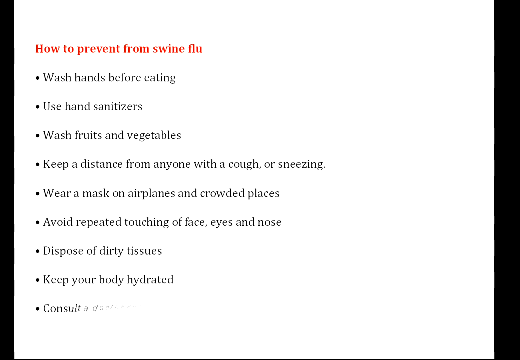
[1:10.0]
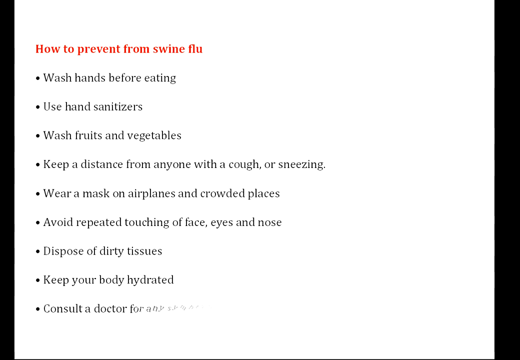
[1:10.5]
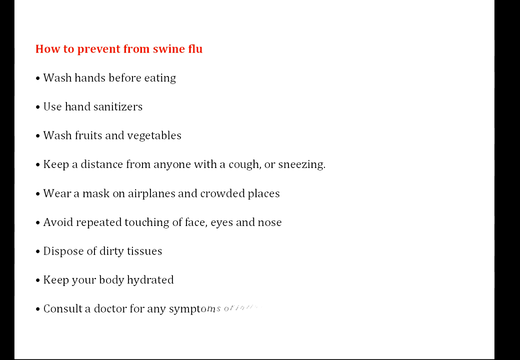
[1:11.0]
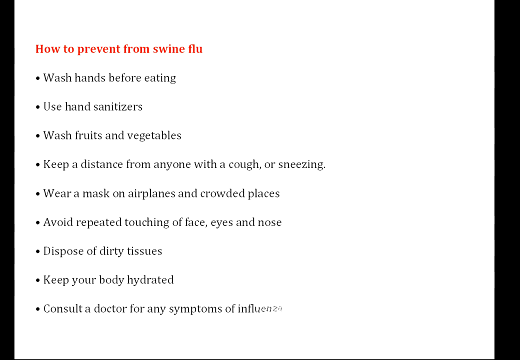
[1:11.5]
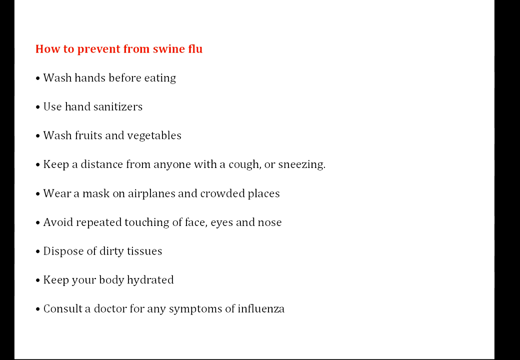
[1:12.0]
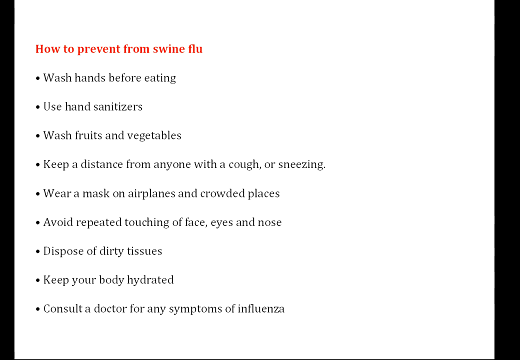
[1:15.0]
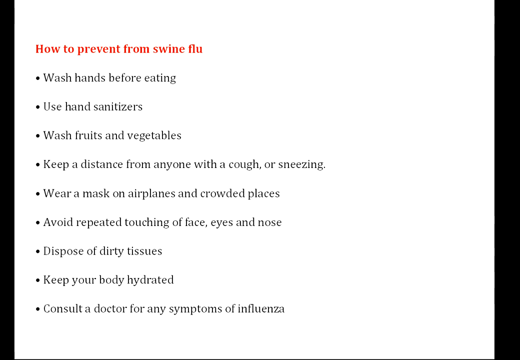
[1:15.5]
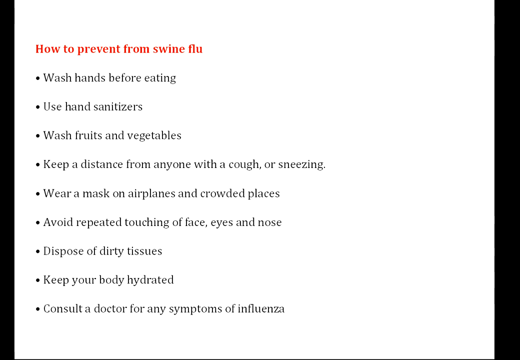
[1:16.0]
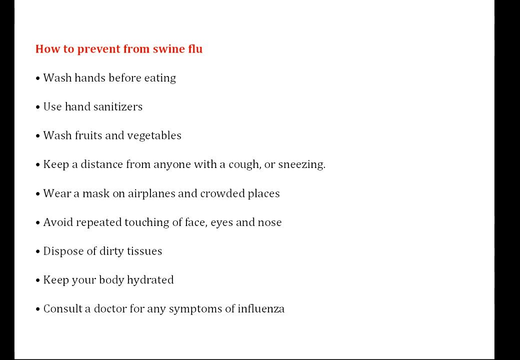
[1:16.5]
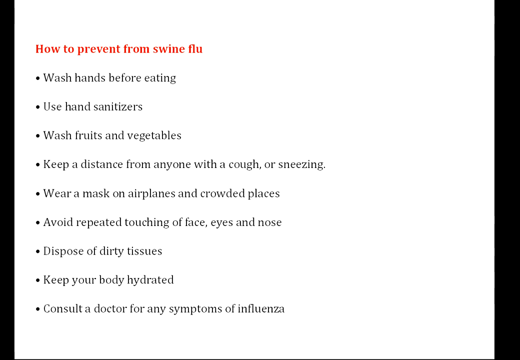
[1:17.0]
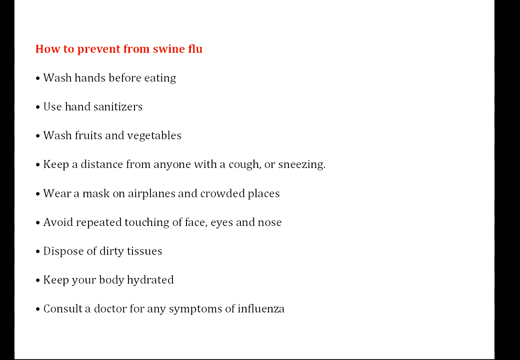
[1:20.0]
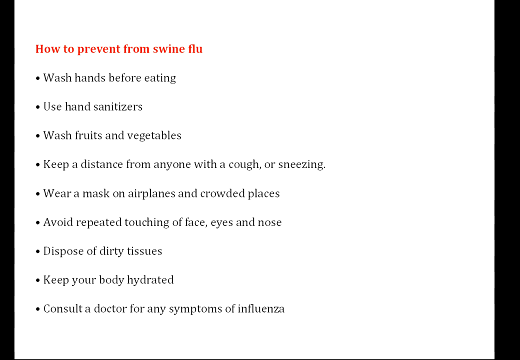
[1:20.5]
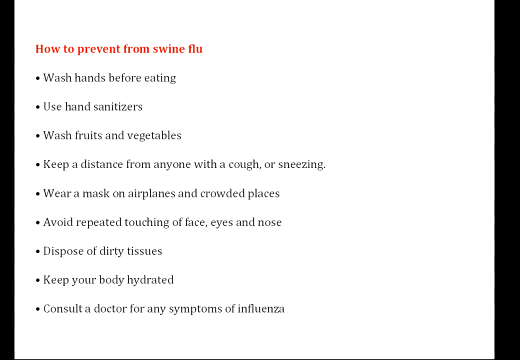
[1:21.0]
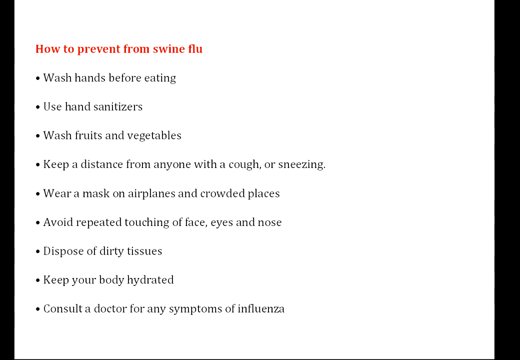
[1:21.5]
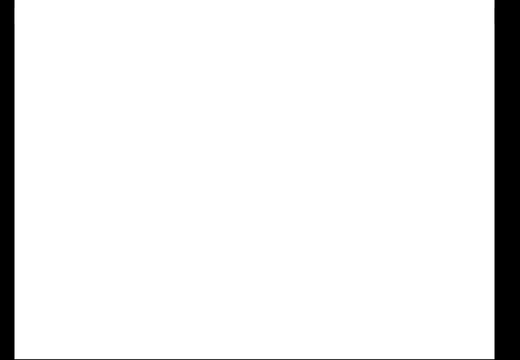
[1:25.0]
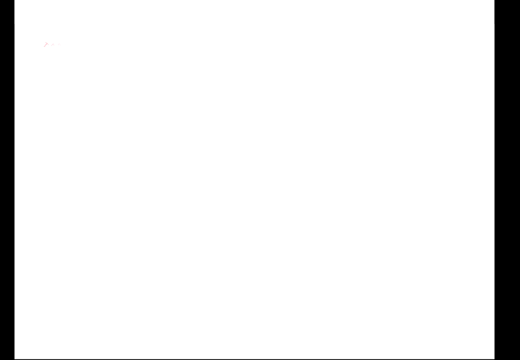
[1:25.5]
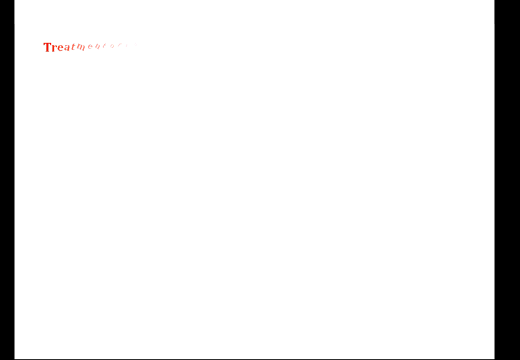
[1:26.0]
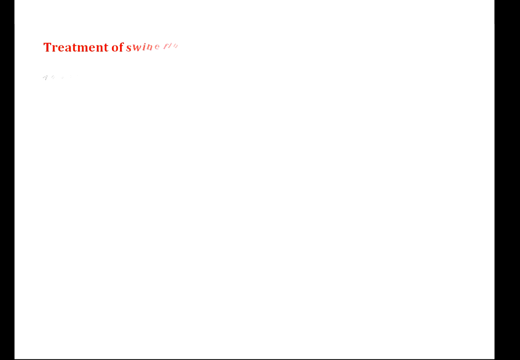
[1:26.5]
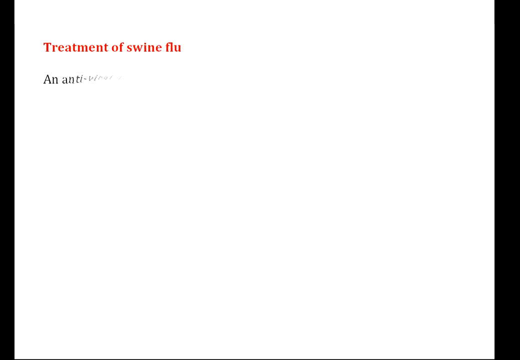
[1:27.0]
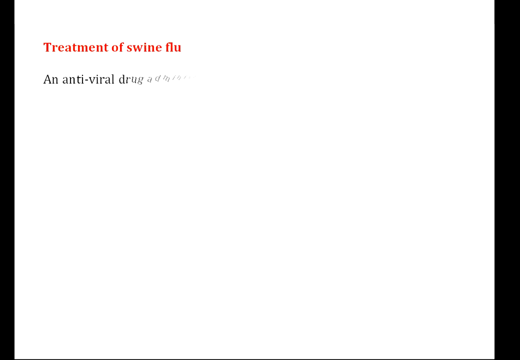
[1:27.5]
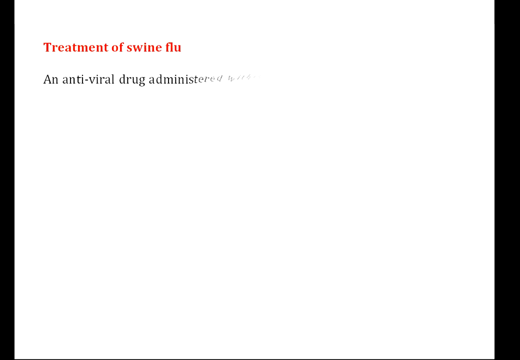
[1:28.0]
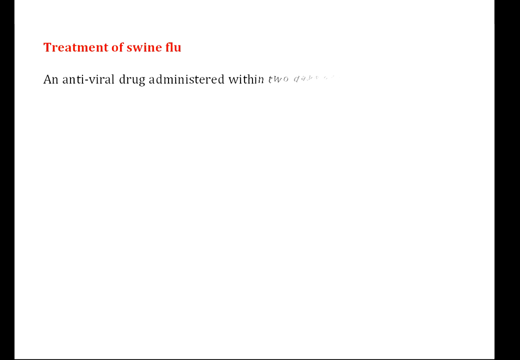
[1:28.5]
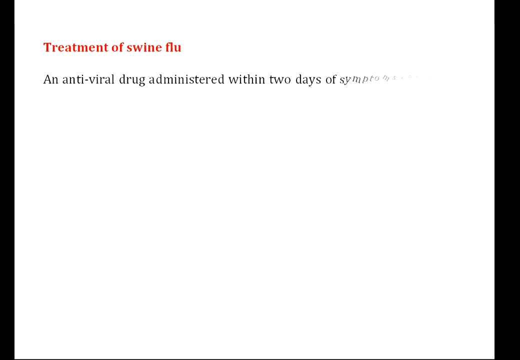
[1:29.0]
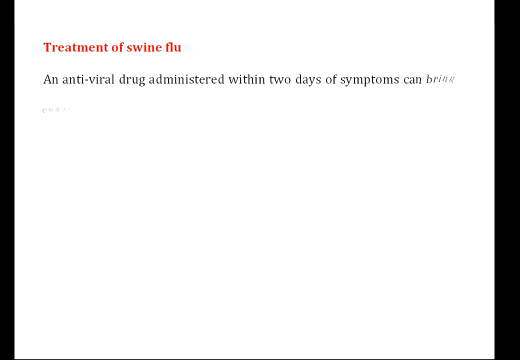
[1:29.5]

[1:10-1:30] On a white screen, red text reads "How to prevent from swine flu". Below this header, bulleted points in black text include: wash hands before eating, use hand sanitizers, wash fruits and vegetables, keep a distance from anyone with a cough or sneezing, wear a mask on airplanes and crowded places, avoid repeated touching of face, eyes, and nose, dispose of dirty tissues, keep your body hydrated, and consult a doctor for any symptoms of influenza. The screen fades, and text appears on another screen. At the top, a red header reads "Treatment of Swine Flu". Below it, a definition is added slowly, one letter at a time, in black text. By the end of the shot, the words "An anti-viral drug administered within two days of symptoms can bring considerable" have been added to the screen.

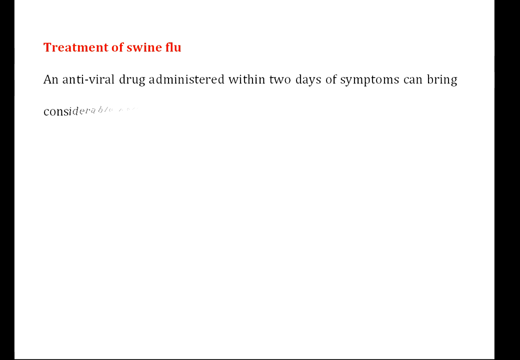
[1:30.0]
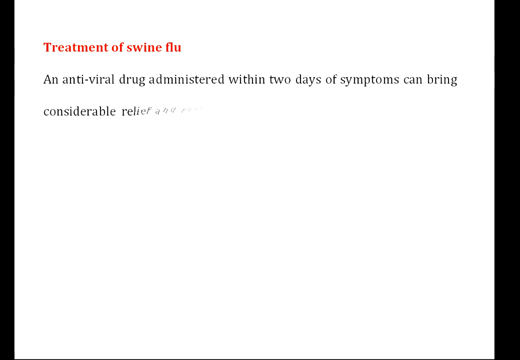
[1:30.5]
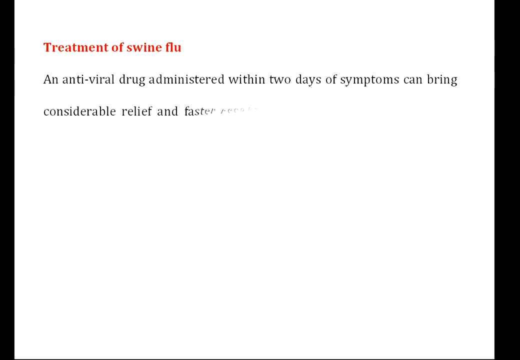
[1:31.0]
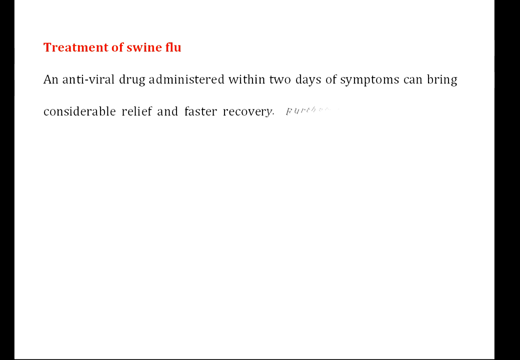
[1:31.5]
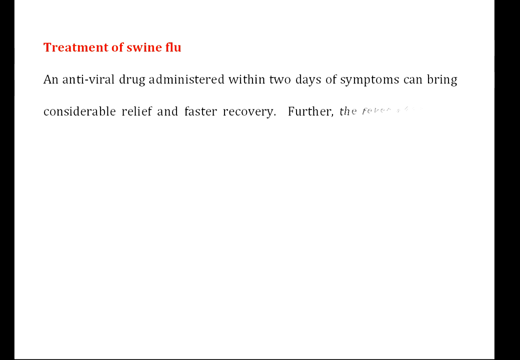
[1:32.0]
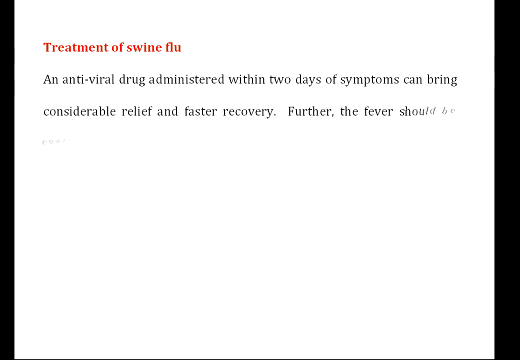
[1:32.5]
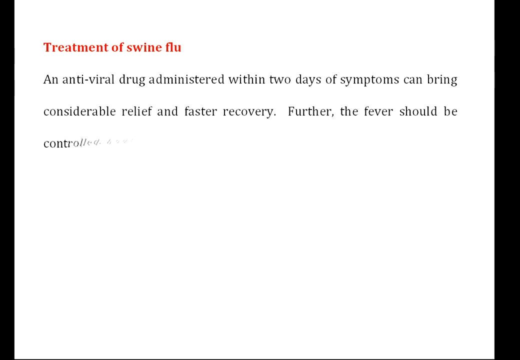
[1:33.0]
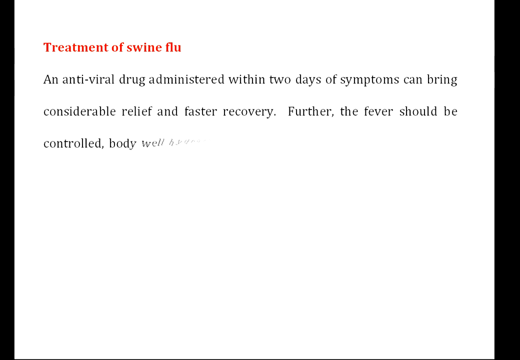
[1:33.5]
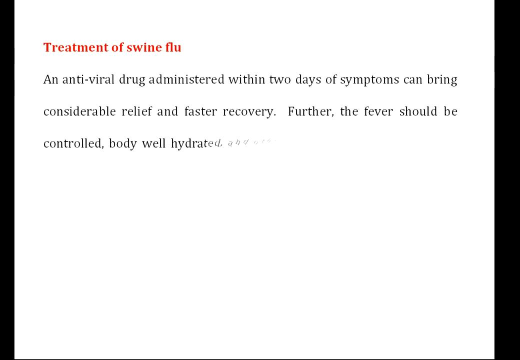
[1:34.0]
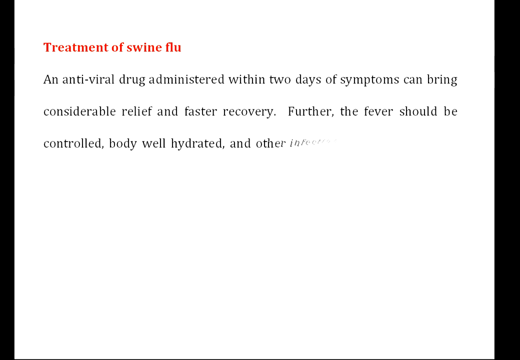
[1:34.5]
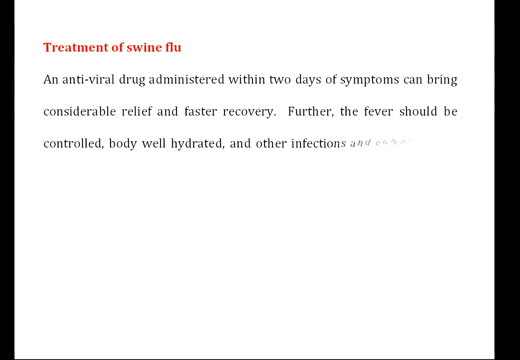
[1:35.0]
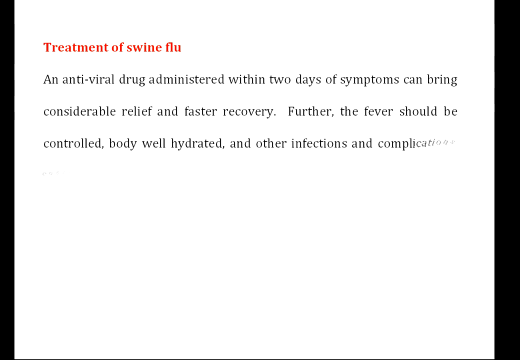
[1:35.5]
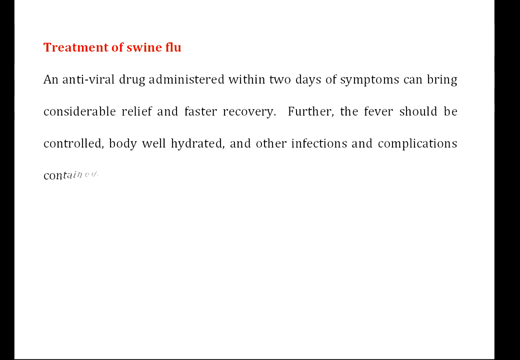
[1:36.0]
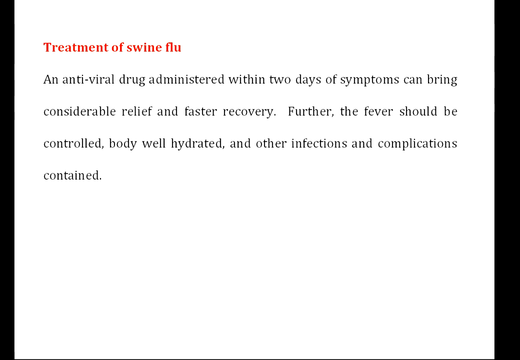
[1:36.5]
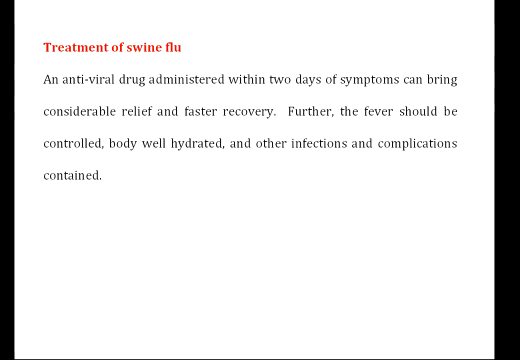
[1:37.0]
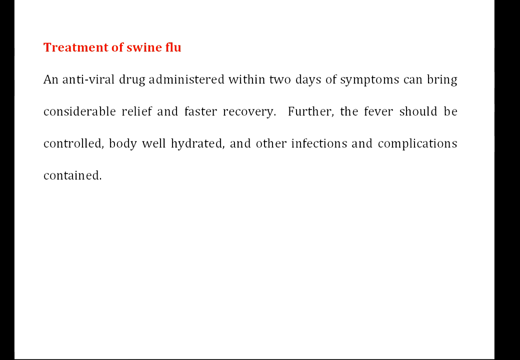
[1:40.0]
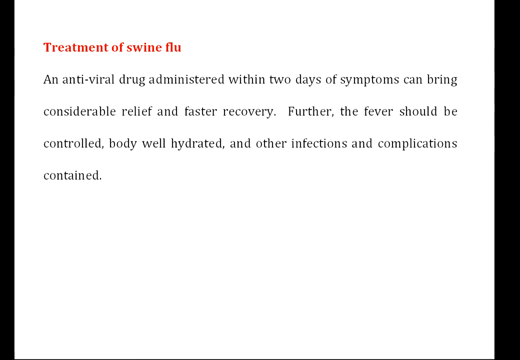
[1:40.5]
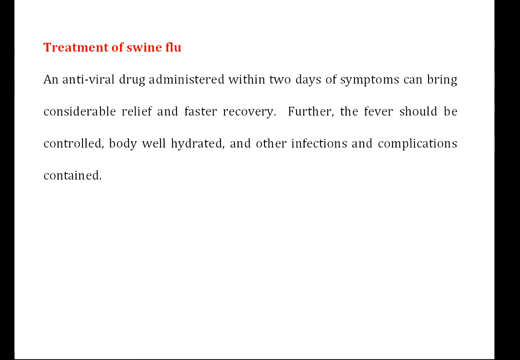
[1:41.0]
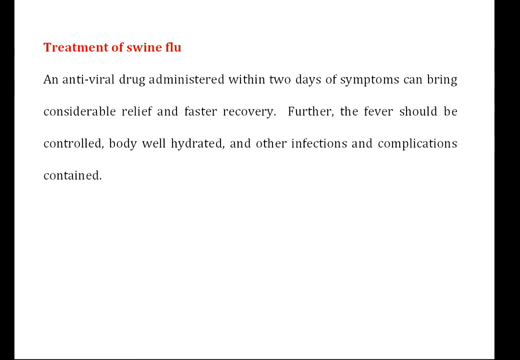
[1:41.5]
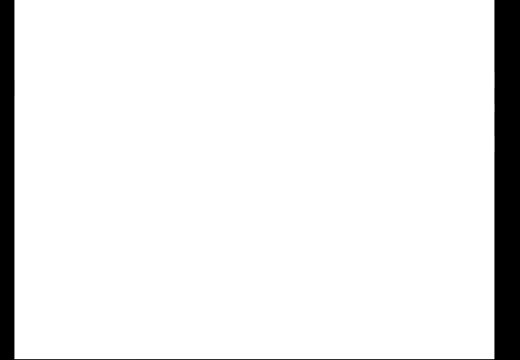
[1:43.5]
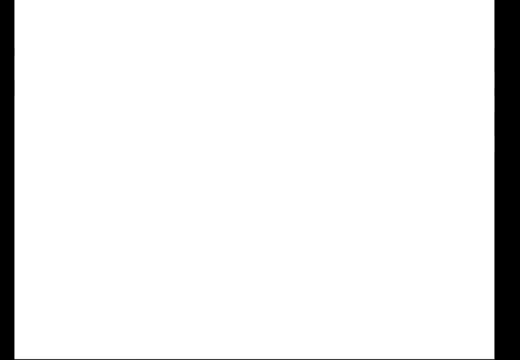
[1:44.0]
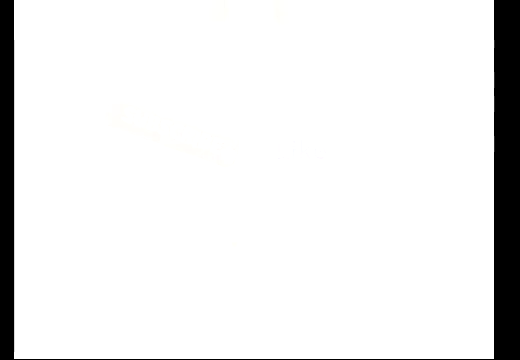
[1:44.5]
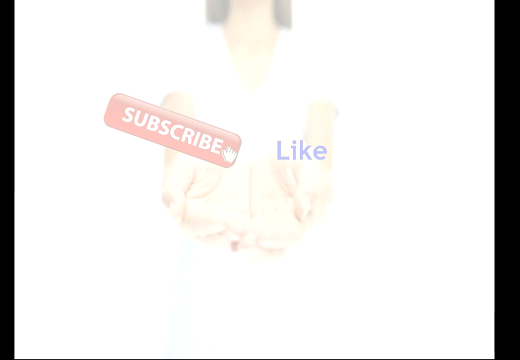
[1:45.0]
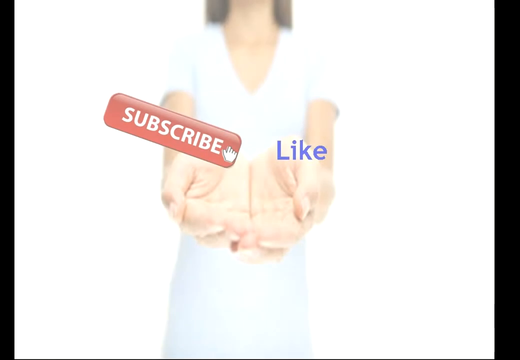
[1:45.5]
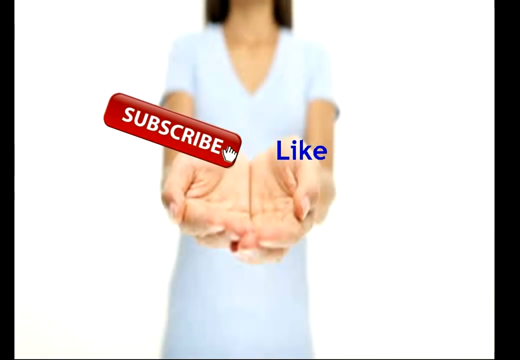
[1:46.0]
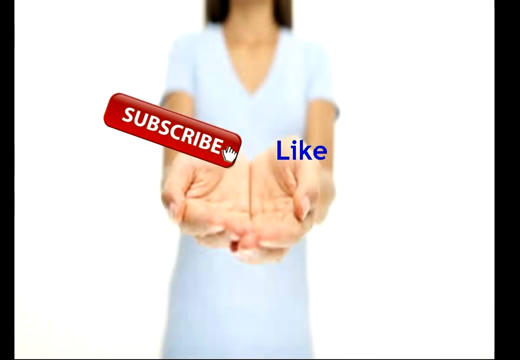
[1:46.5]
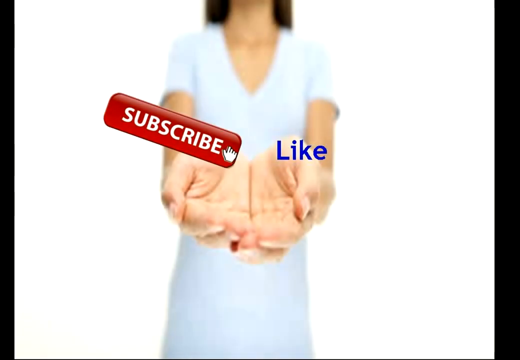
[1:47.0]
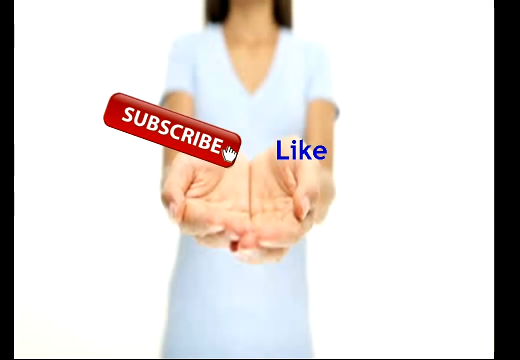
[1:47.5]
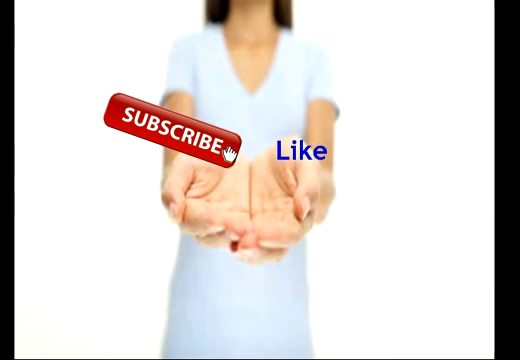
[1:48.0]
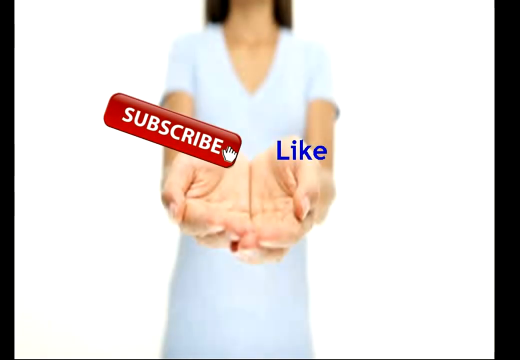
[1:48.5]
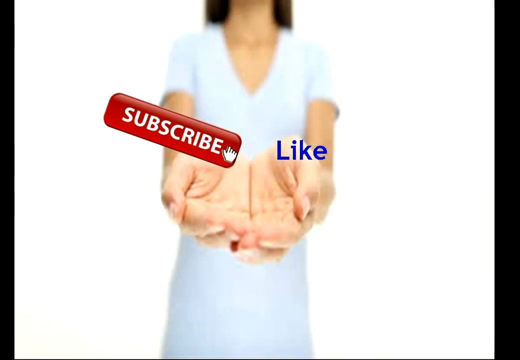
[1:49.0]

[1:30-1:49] A white screen has a red header reading "Treatment of swine flu." Below it, black text is added one word at a time, until the page reads "An antiviral drug administered within two days of symptoms can bring considerable relief and faster recovery. Further, the fever should be controlled, body well hydrated, and other infections and complications contained." The screen fades to a photograph of a woman, shown from the chin down, holding her hands out and cupping them together toward the camera. Most of her body is blurry, but her hands are clear. Just above her hands are a red subscribe button on the left and the word "like" in blue text on the right.